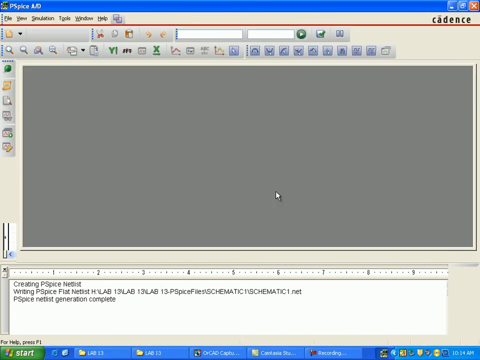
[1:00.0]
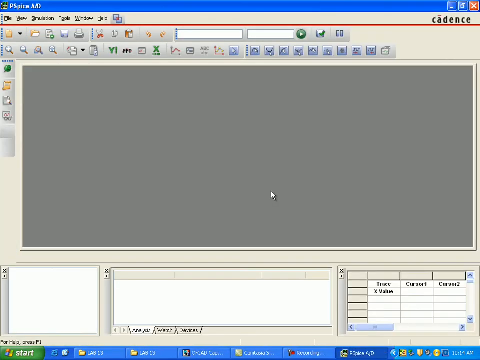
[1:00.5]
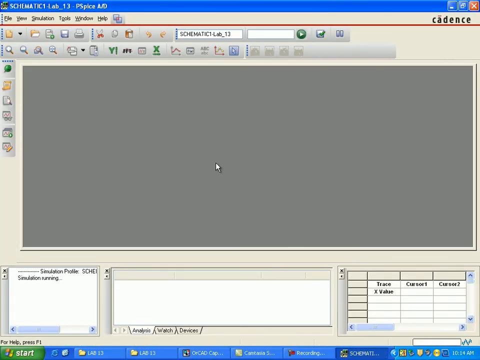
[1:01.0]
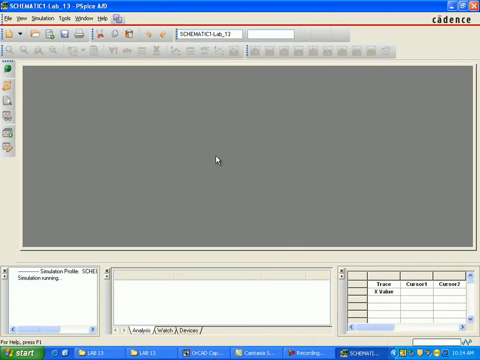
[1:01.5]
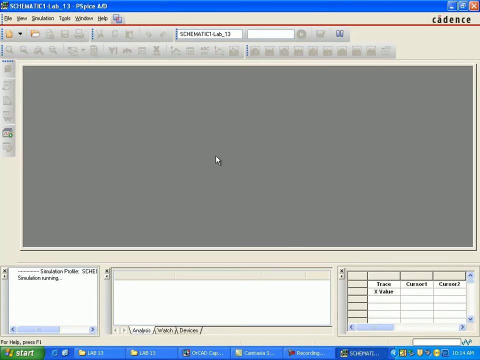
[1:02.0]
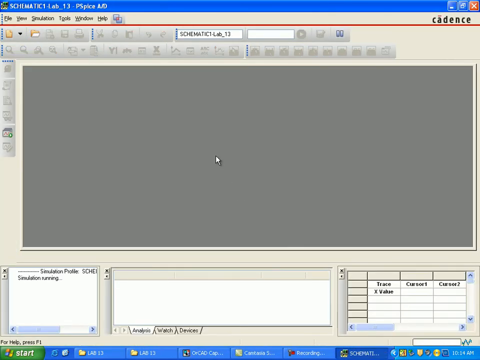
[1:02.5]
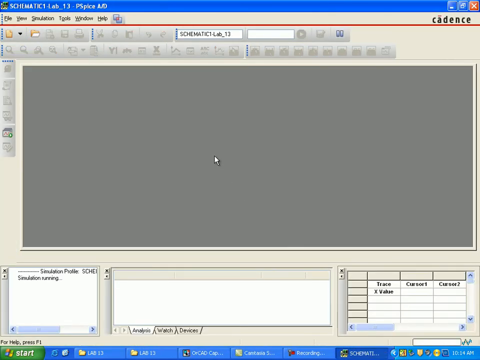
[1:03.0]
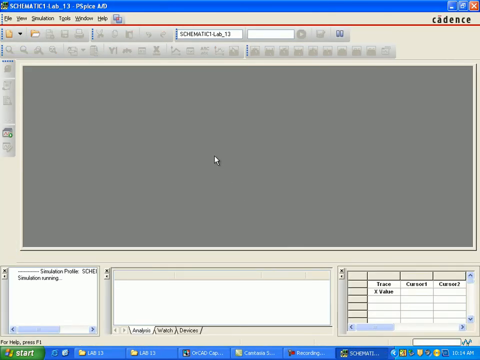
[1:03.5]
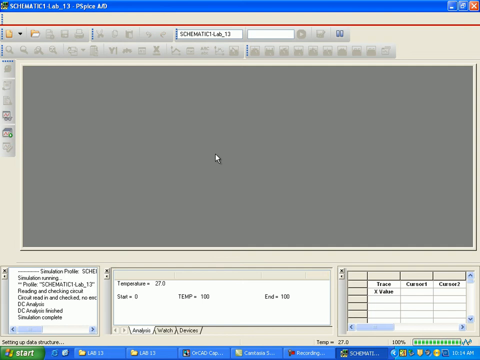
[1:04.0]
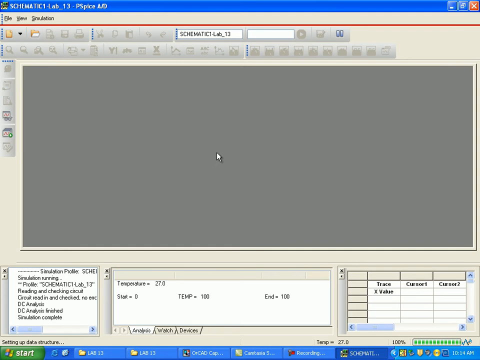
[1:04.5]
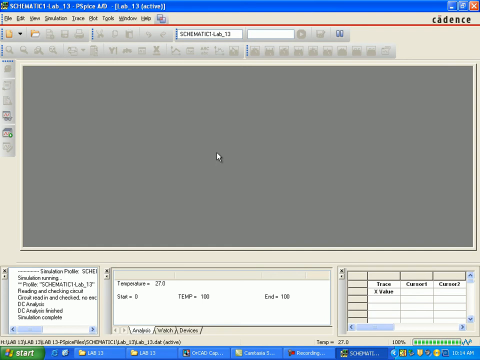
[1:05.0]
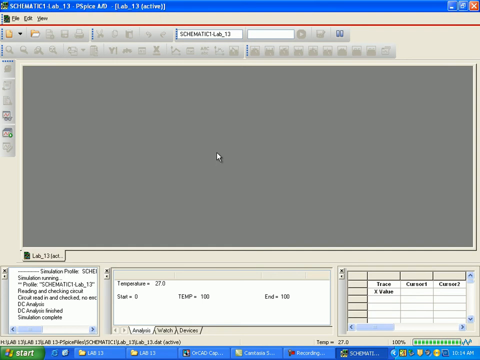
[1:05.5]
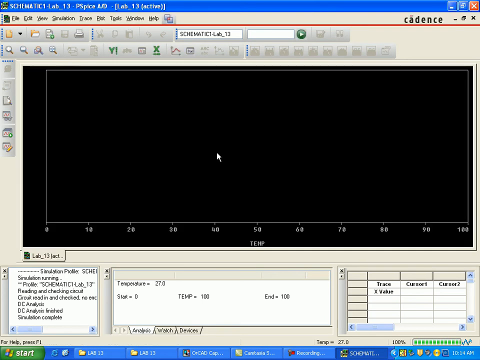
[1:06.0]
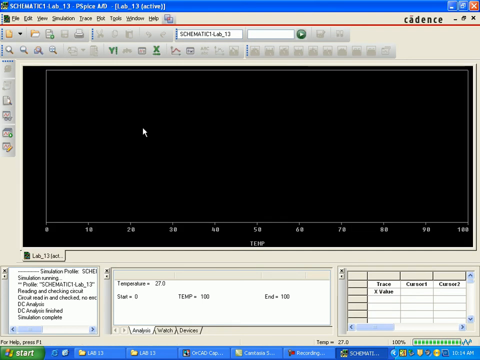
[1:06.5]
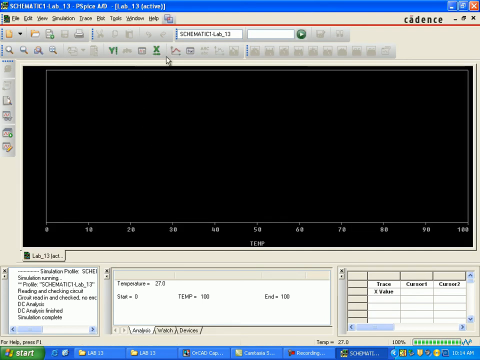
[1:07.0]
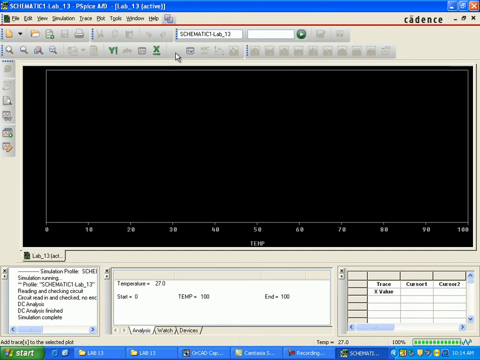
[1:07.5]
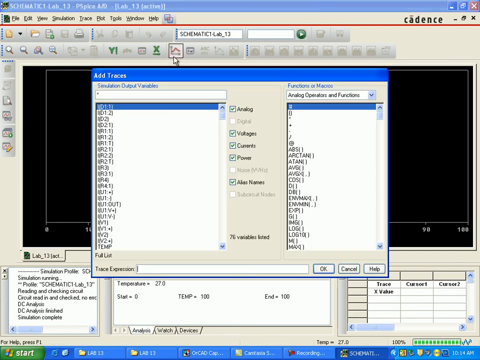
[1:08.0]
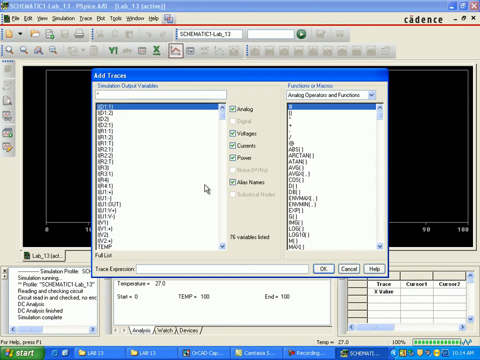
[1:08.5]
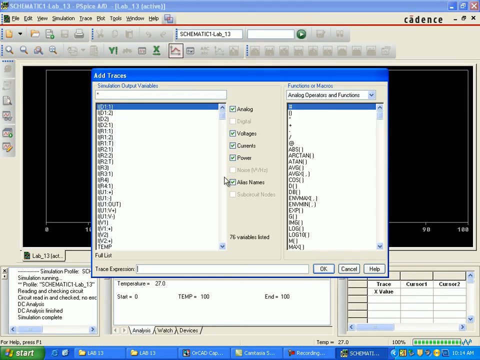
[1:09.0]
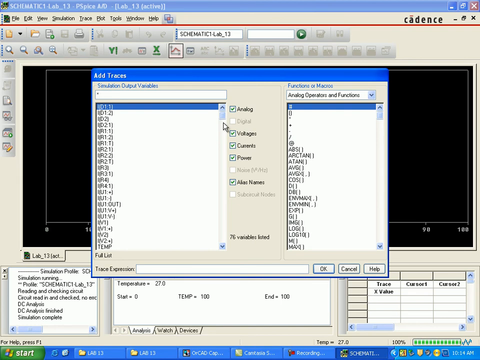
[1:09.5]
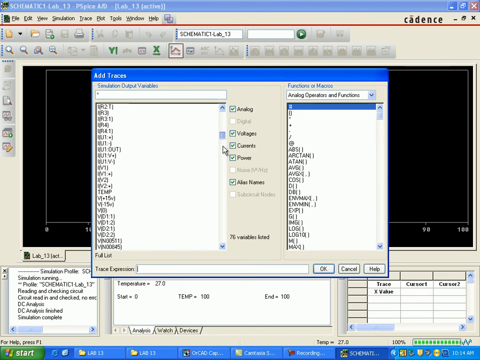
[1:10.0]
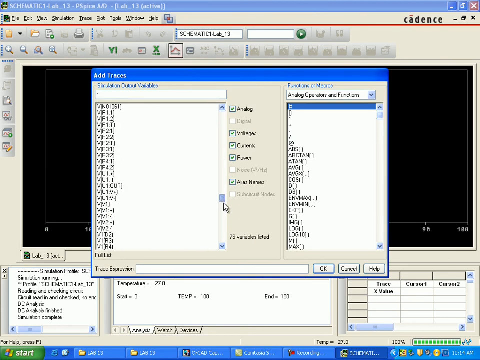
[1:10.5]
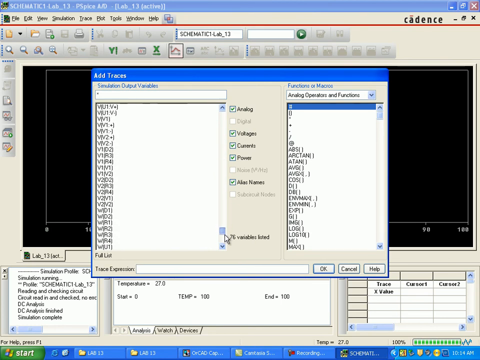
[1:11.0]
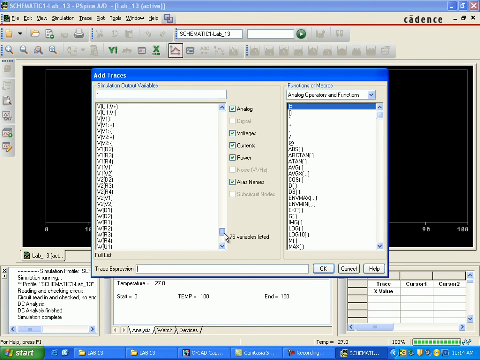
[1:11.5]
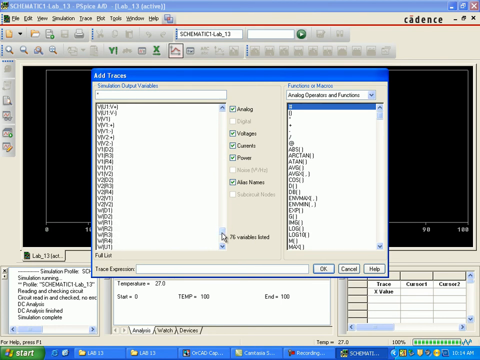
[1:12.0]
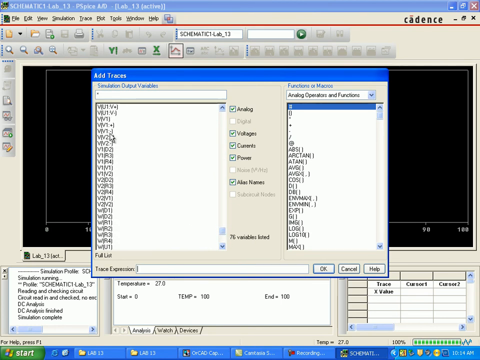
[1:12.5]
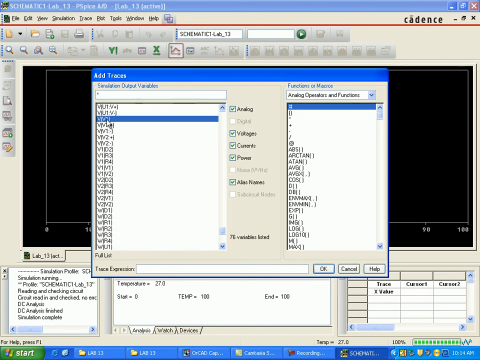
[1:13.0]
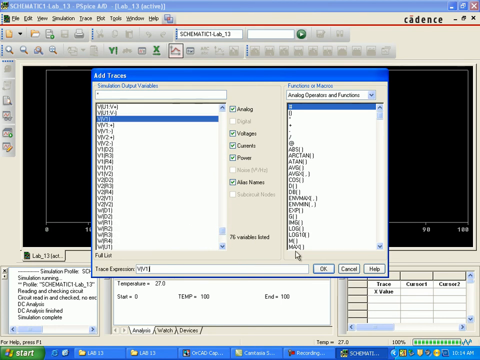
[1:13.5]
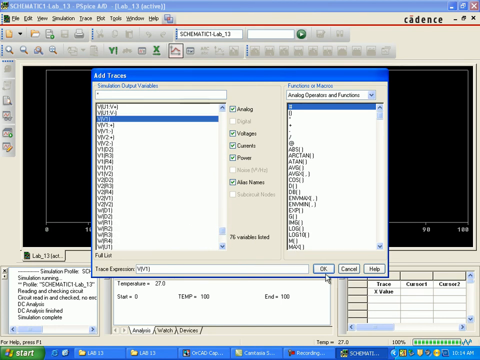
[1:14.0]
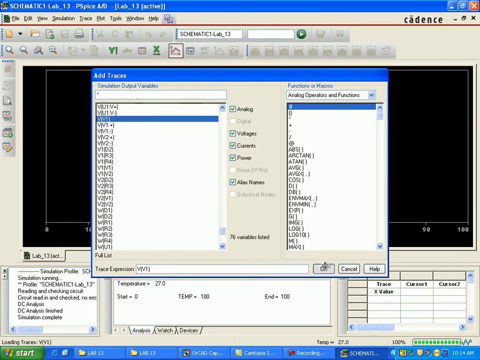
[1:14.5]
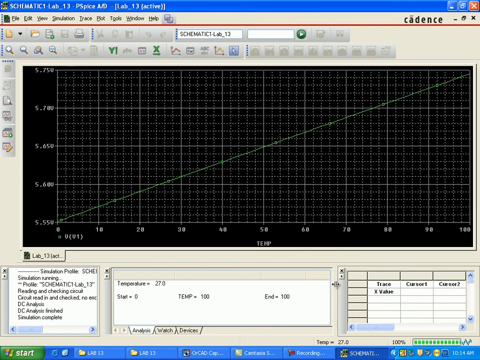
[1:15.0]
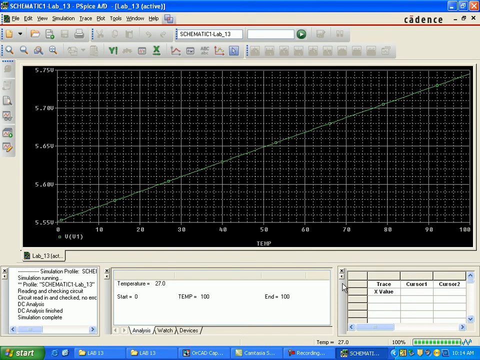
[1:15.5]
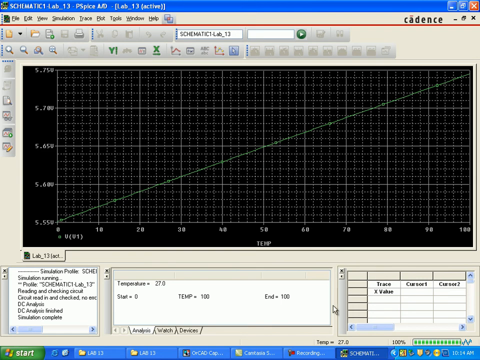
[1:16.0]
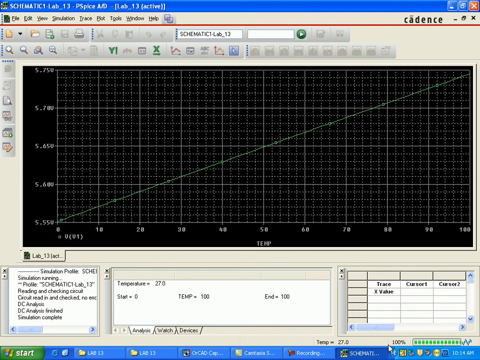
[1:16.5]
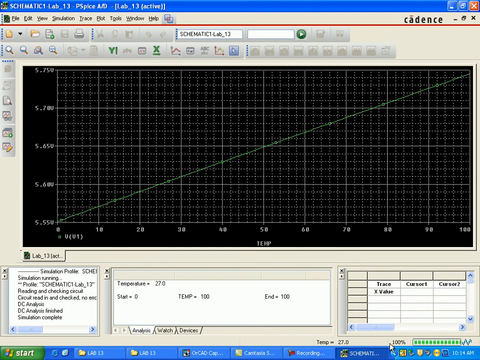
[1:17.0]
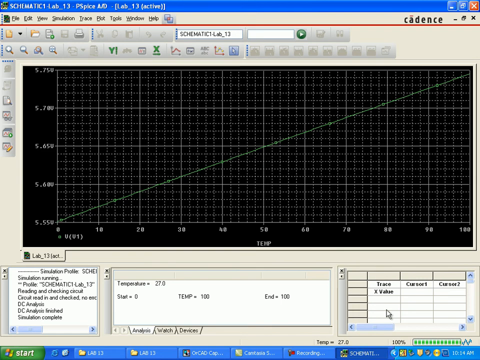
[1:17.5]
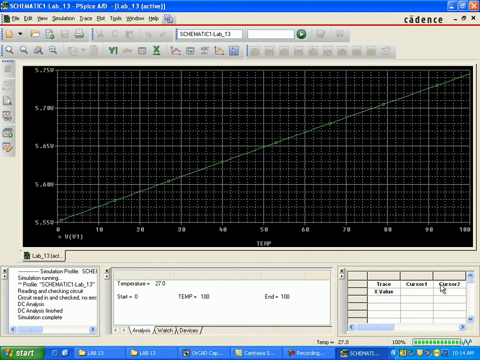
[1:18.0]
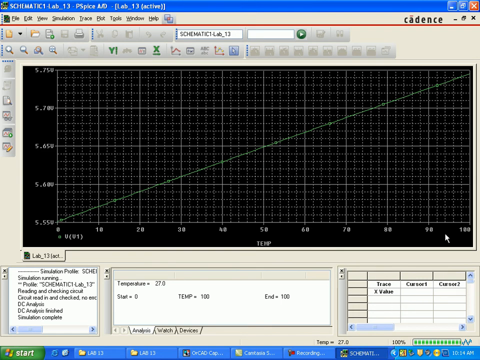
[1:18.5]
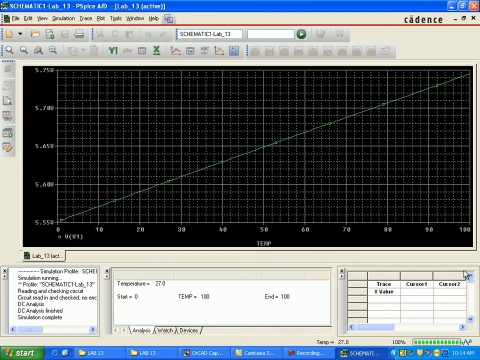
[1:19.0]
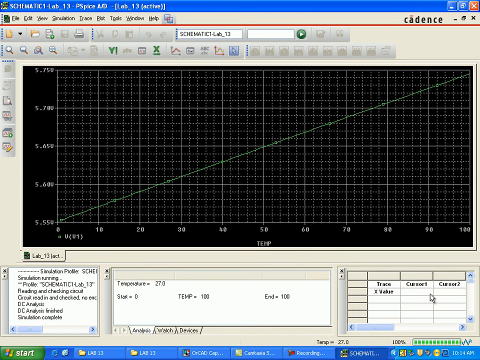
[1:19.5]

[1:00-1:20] The line part of the screen, where the data was, turns gray. It then changes into a black screen with a graph-like setting, something like a bar graph or line graph, with an x-axis and a y-axis. The user changes something in the settings, clicking on something that says "add traces" and then on the third option from the top. A green line comes up, gradually getting higher and higher as time goes on. Nothing else happens after that. A data table is at the bottom right, with one column labeled "trace", the middle column labeled "cursor one", and the right column labeled "cursor two".